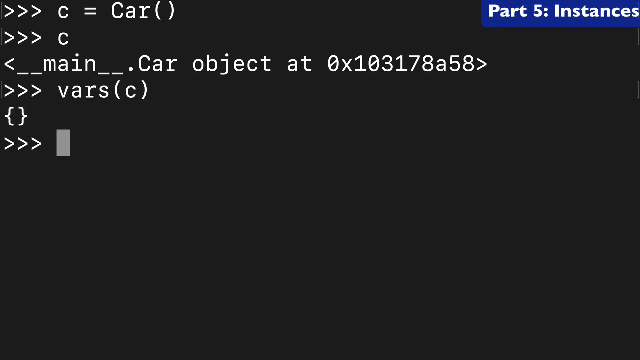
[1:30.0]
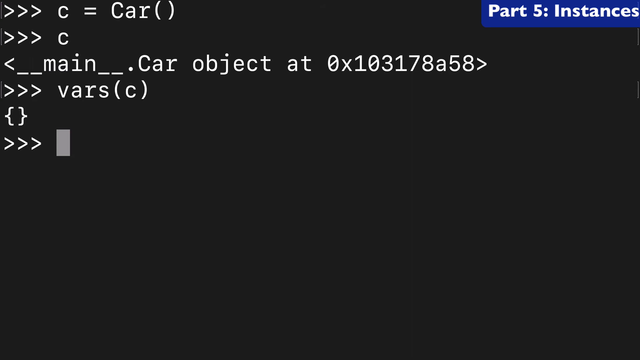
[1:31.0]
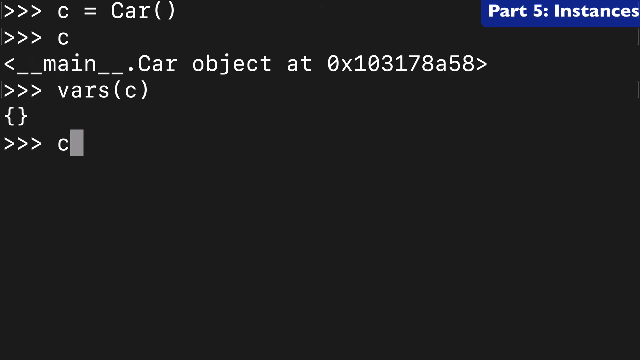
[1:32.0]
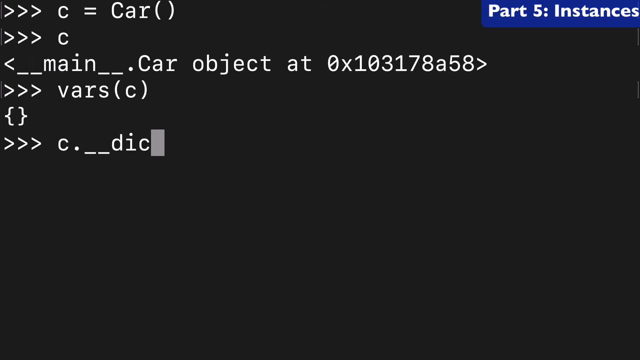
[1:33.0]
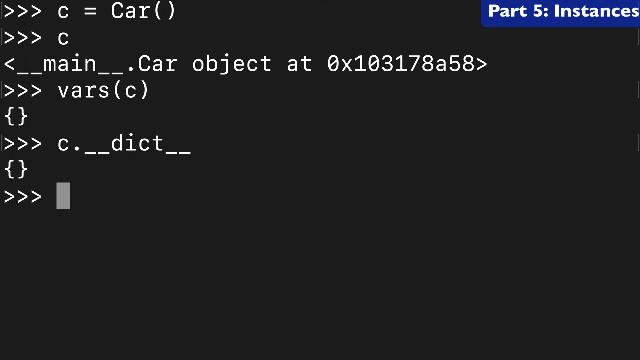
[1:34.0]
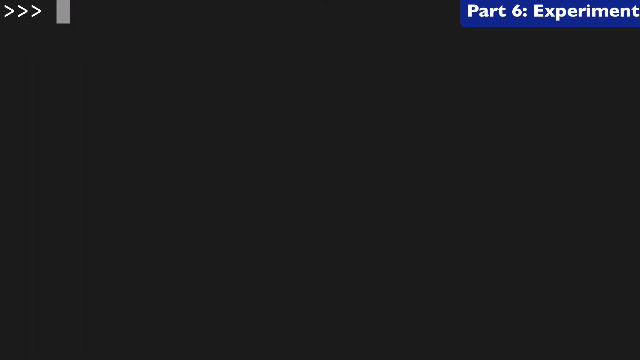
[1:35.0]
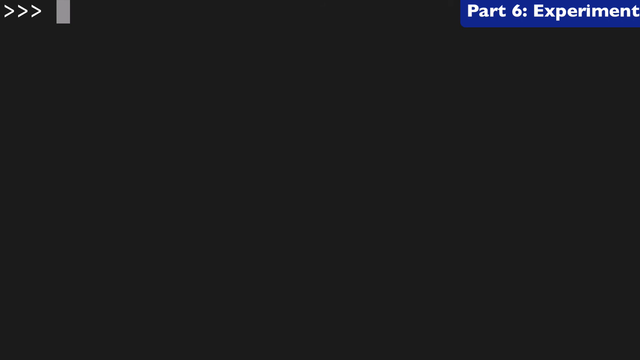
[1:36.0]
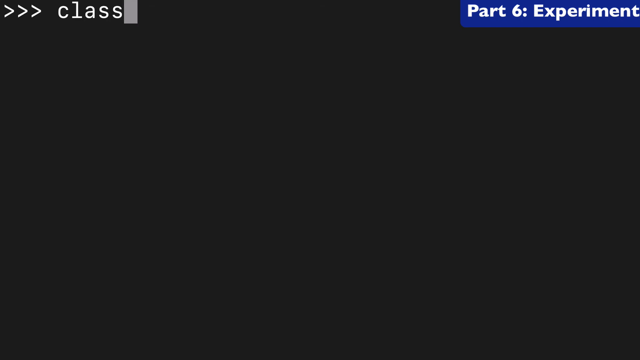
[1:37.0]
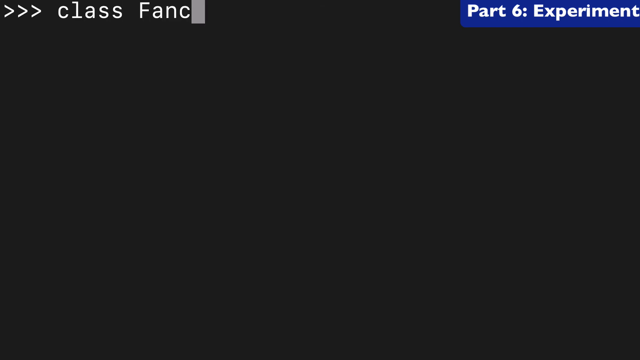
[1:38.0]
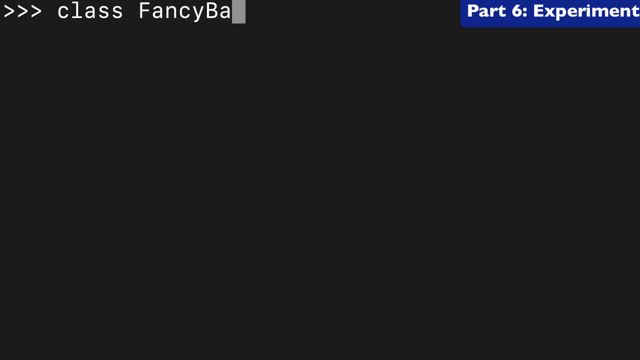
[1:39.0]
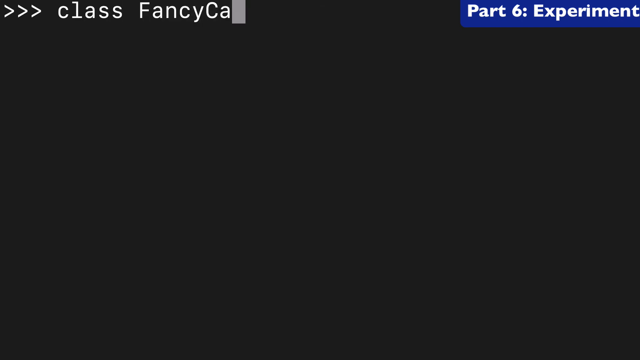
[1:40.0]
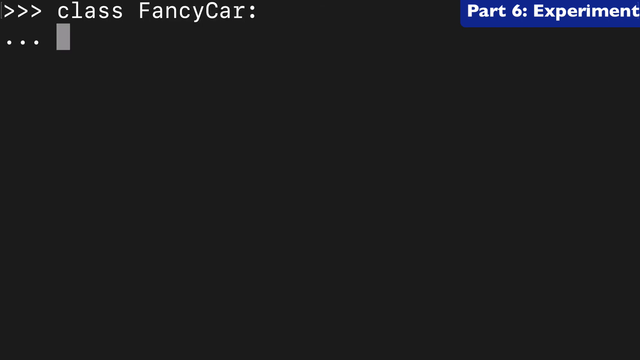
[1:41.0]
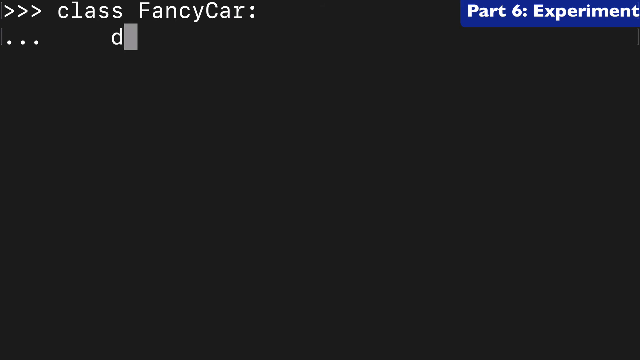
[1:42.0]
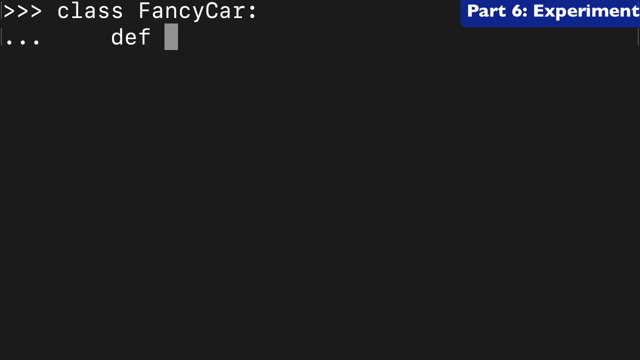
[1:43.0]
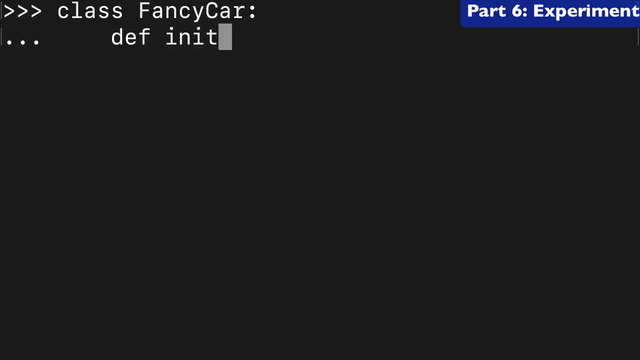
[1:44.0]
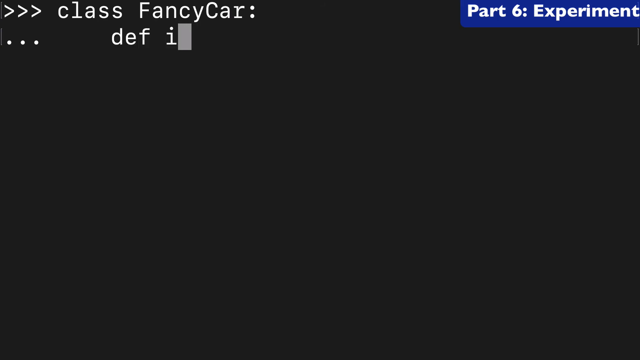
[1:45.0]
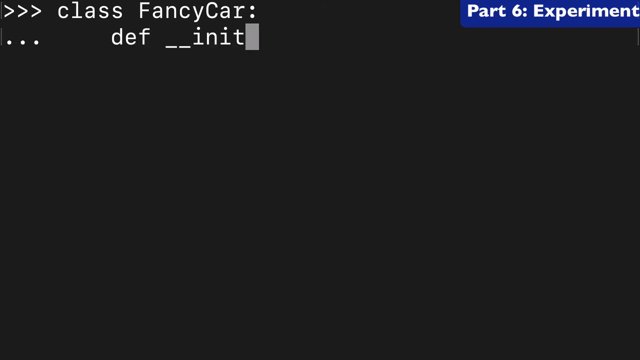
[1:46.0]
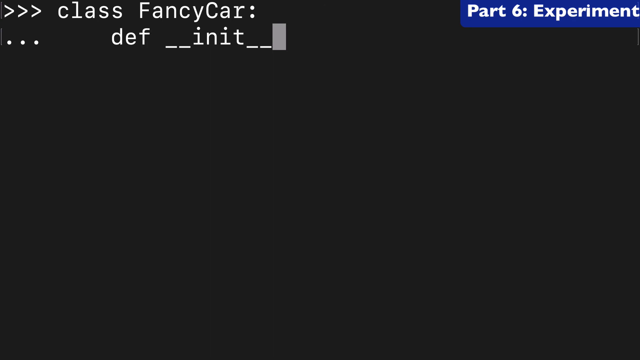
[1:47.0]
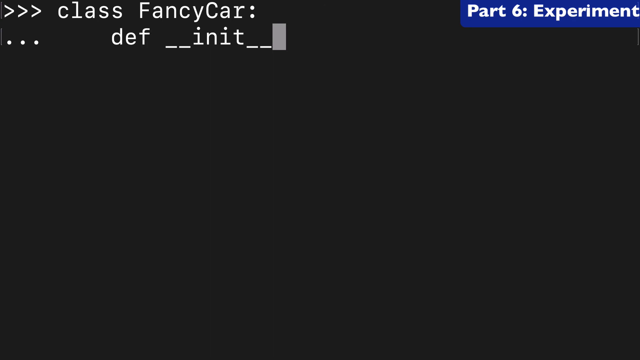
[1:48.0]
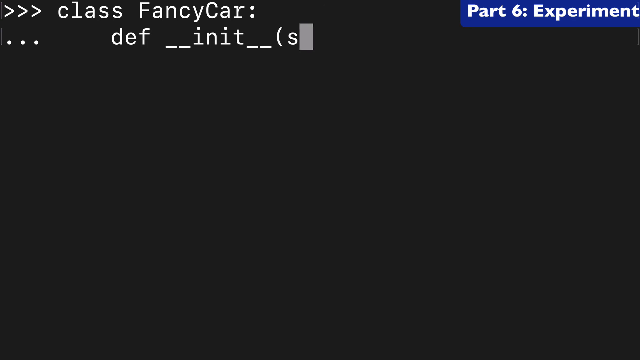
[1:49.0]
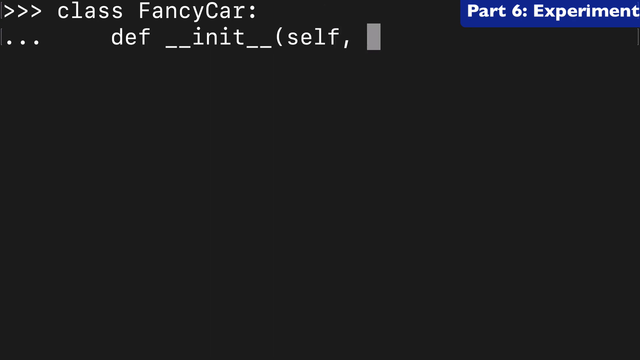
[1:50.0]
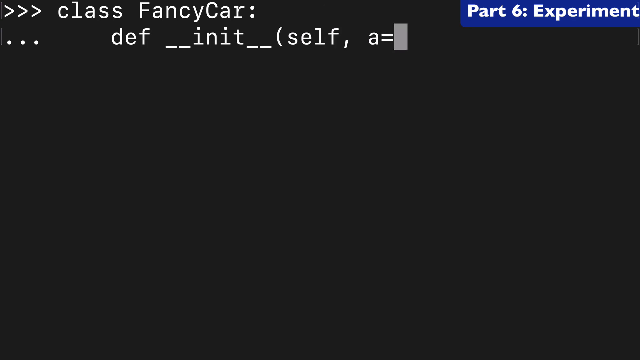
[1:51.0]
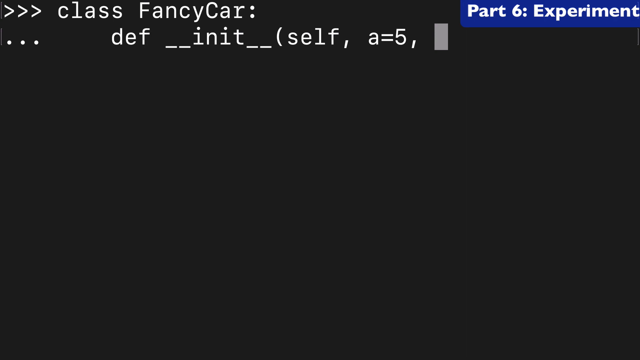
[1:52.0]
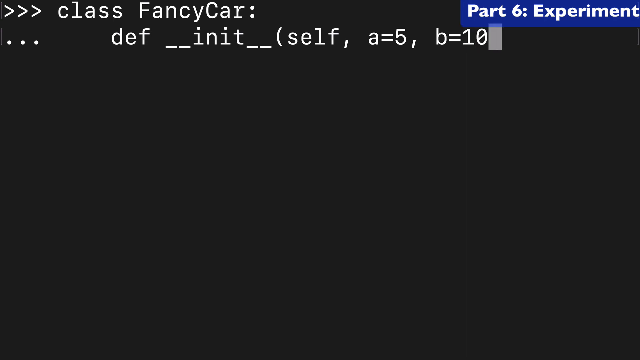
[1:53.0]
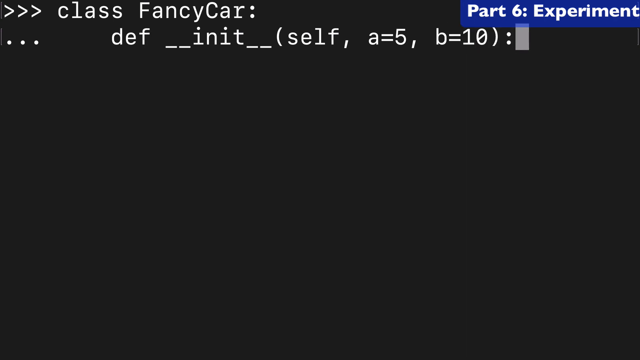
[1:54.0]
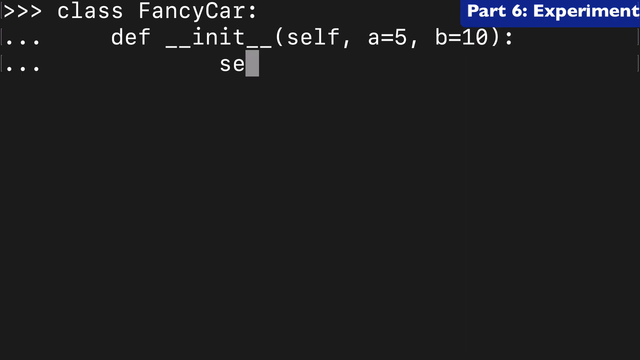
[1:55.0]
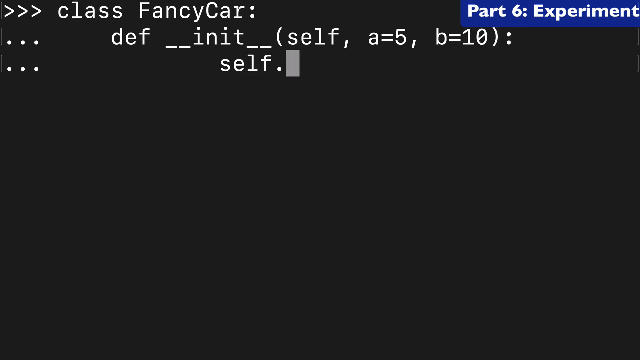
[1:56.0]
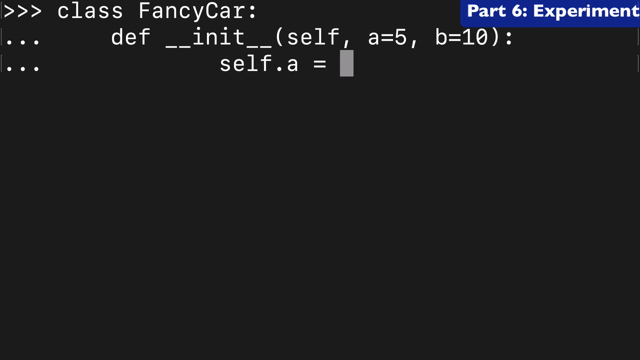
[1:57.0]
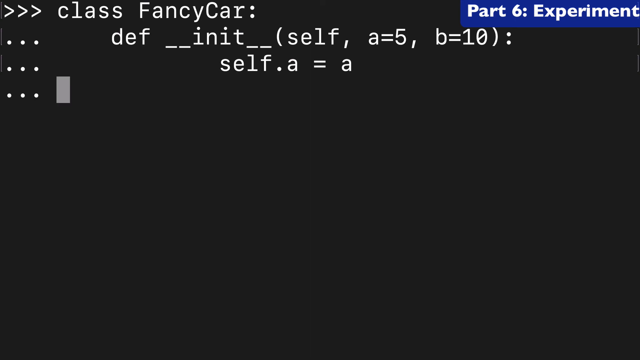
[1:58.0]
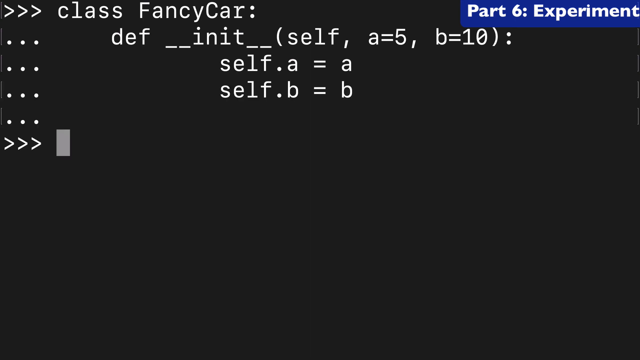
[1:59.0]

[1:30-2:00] In the upper right corner, white text on a blue rectangle says "PART 5" and "instances". Below, the typed code reads "c = Car()", the output shows a main Car object, then "vars(c)" and "c.__dict__" are entered. The label in the upper right then changes to "PART 6" and "experiment", in white on a blue background. On the black background in white font, the code reads "class FancyCar", "def __init__(self, a=5, b=10)", "self.a = a" and "self.b = b".